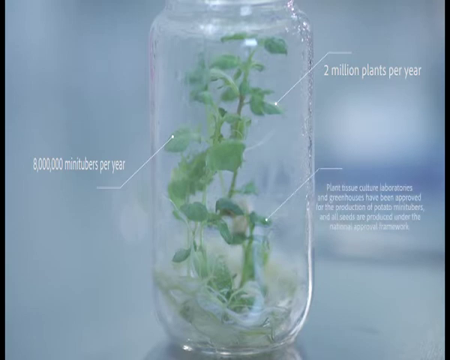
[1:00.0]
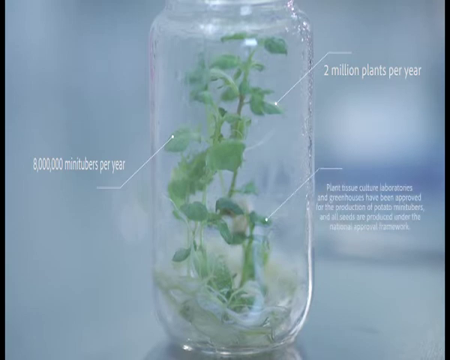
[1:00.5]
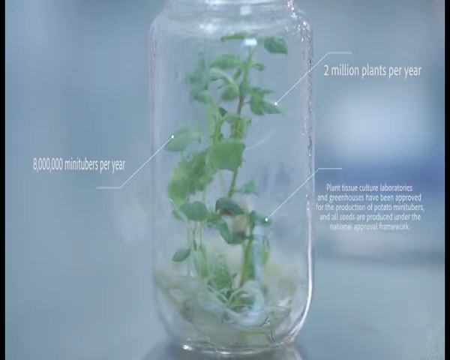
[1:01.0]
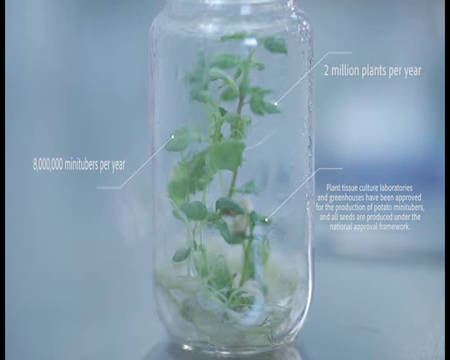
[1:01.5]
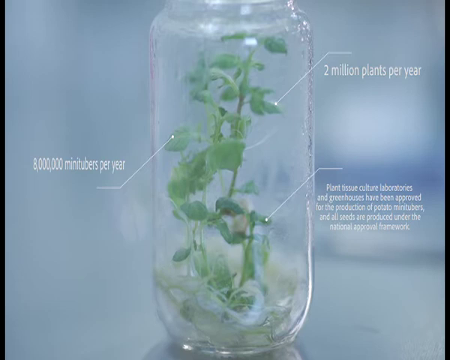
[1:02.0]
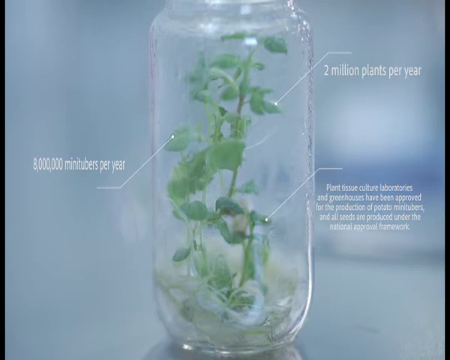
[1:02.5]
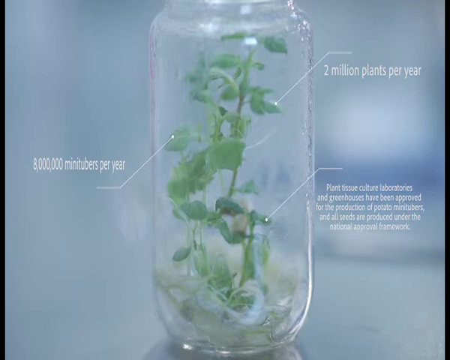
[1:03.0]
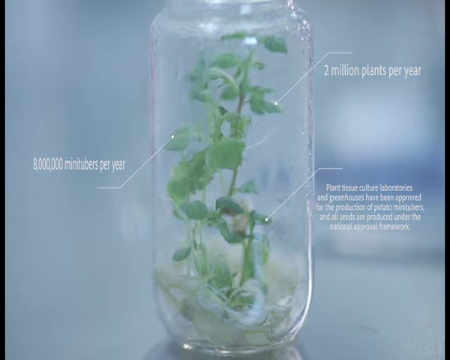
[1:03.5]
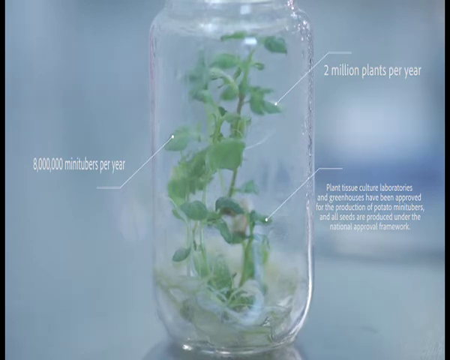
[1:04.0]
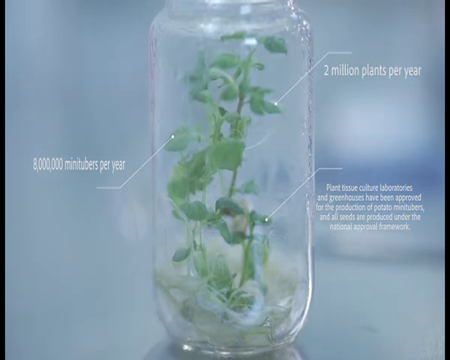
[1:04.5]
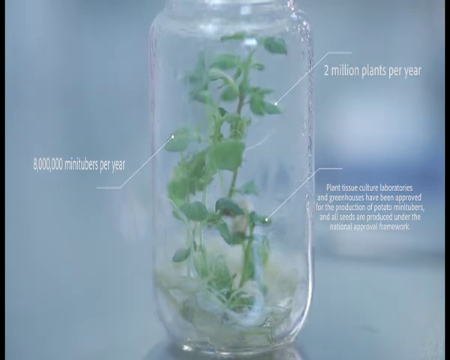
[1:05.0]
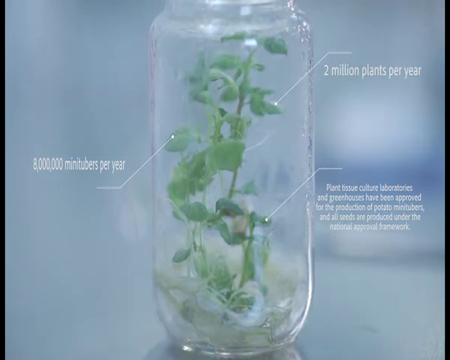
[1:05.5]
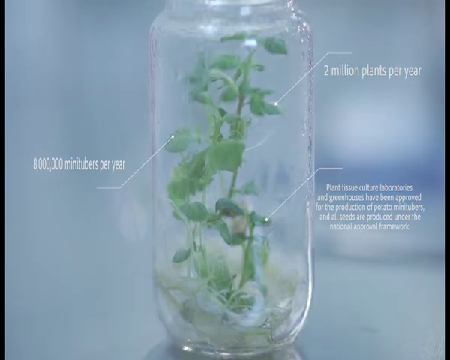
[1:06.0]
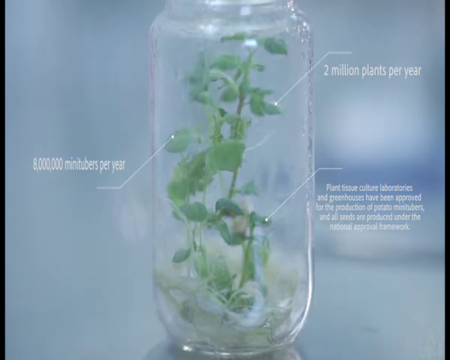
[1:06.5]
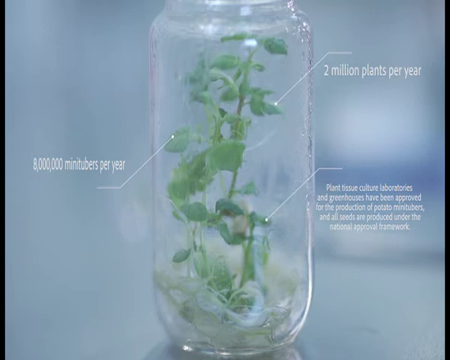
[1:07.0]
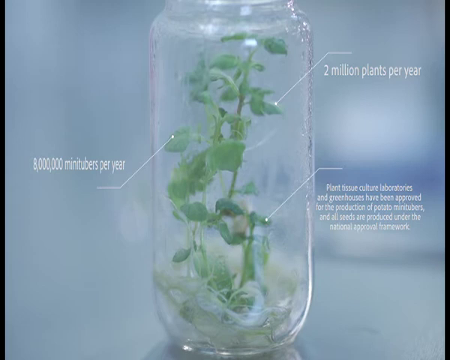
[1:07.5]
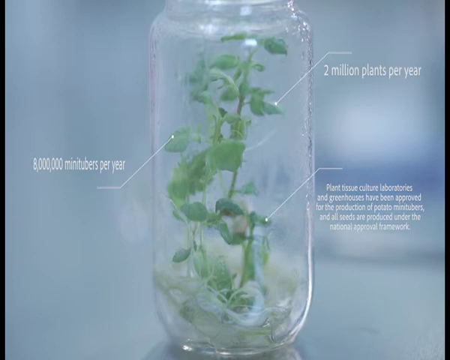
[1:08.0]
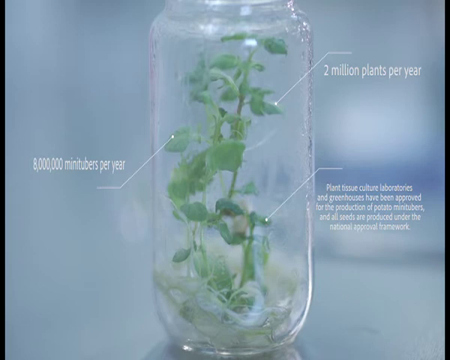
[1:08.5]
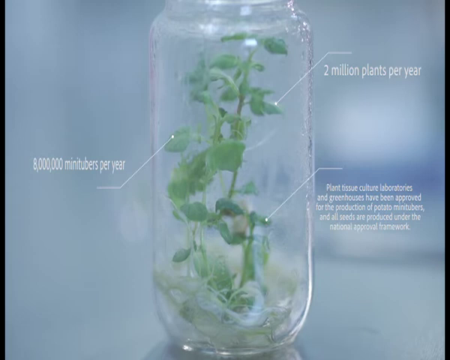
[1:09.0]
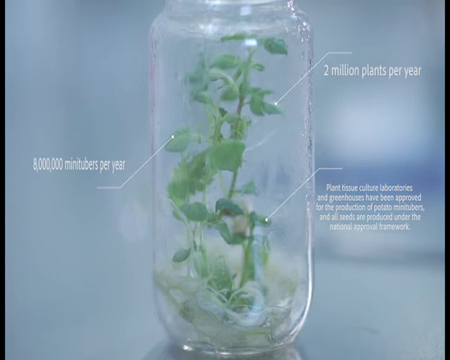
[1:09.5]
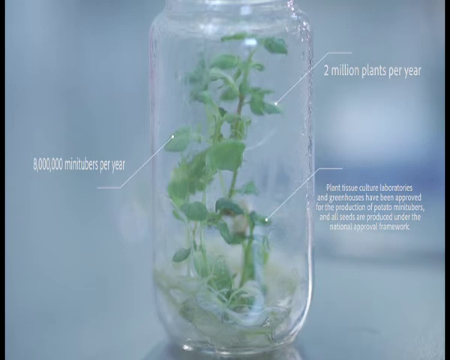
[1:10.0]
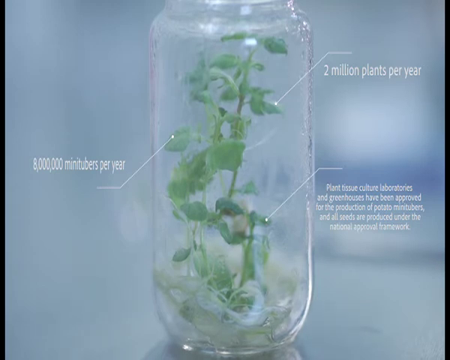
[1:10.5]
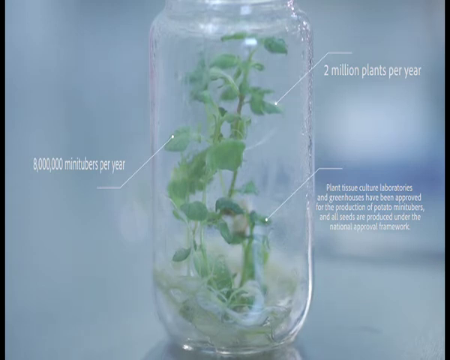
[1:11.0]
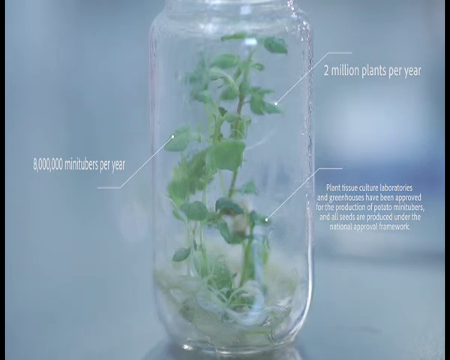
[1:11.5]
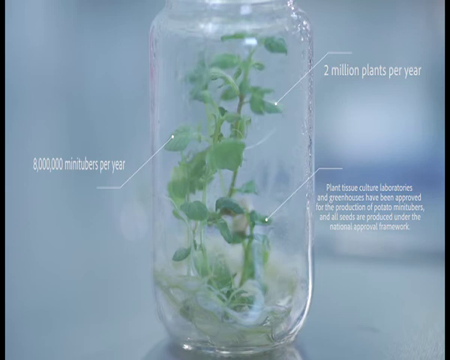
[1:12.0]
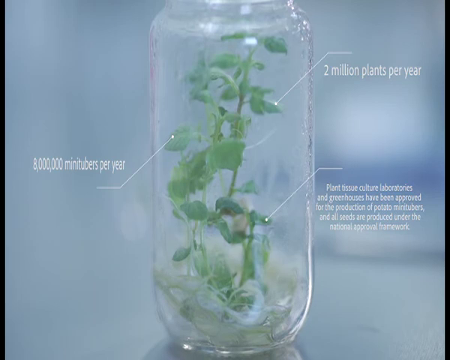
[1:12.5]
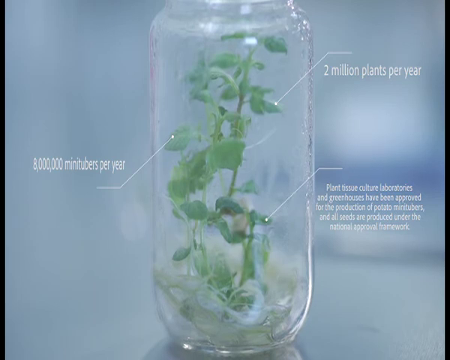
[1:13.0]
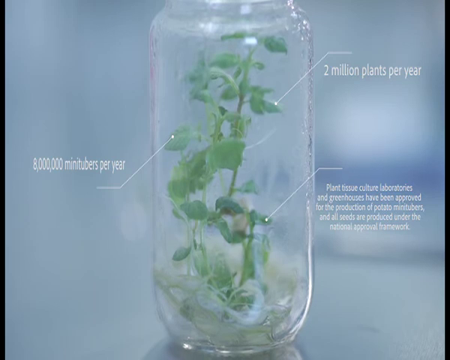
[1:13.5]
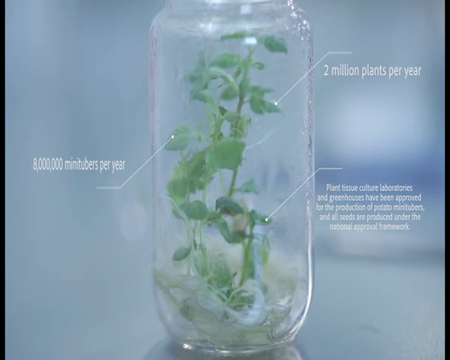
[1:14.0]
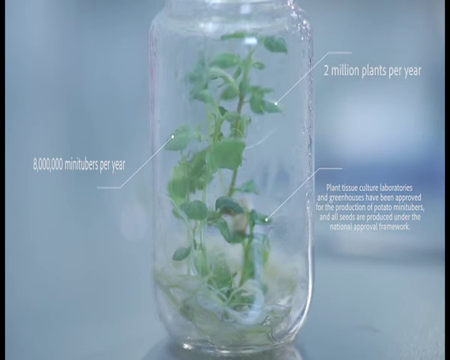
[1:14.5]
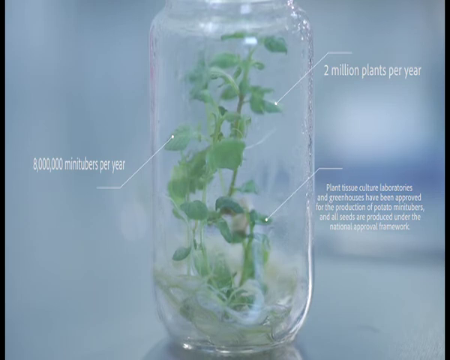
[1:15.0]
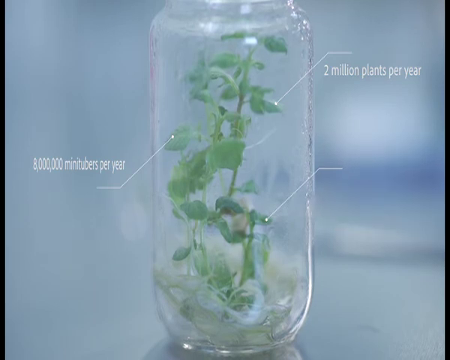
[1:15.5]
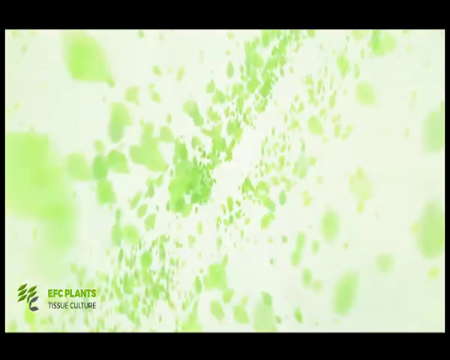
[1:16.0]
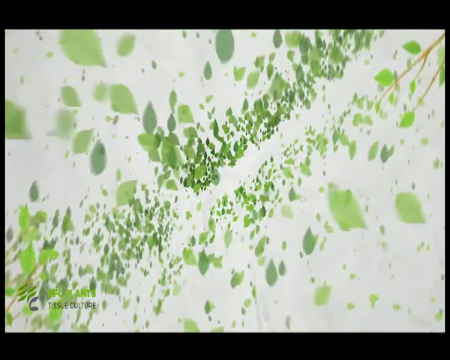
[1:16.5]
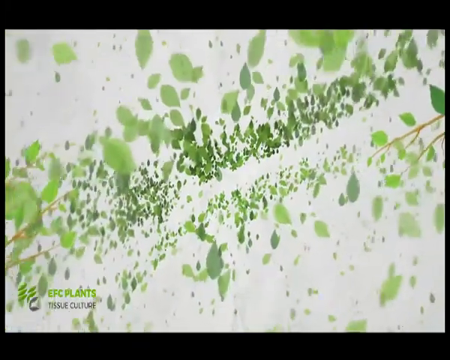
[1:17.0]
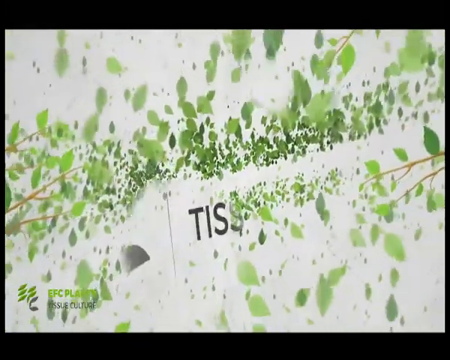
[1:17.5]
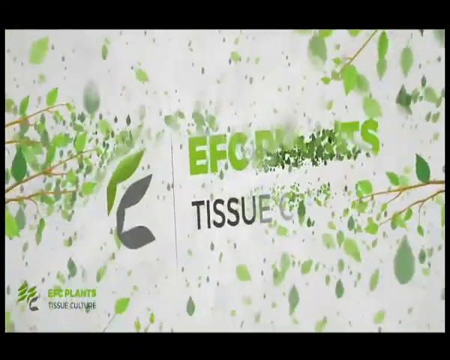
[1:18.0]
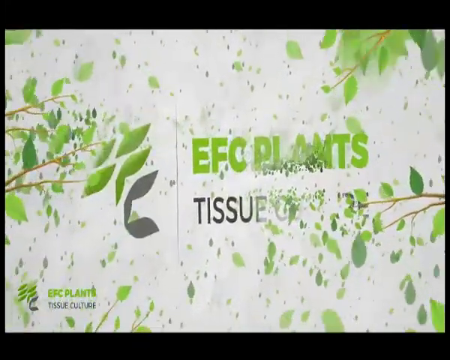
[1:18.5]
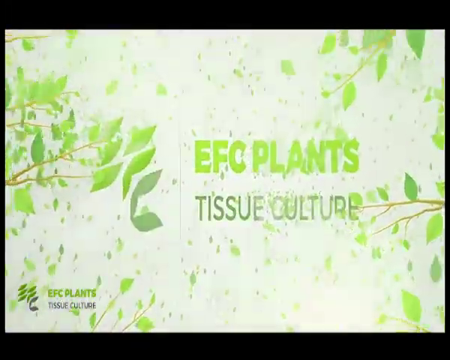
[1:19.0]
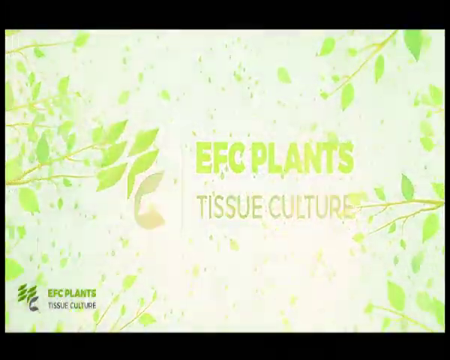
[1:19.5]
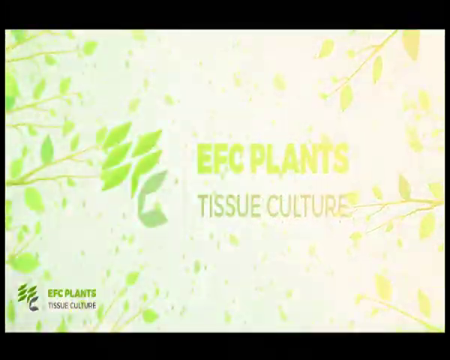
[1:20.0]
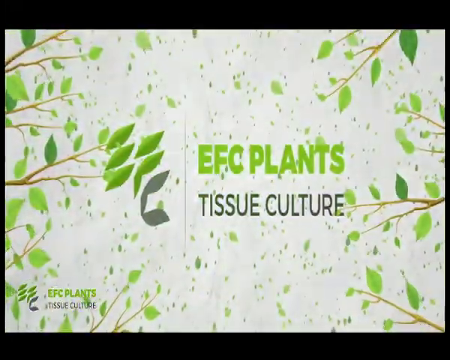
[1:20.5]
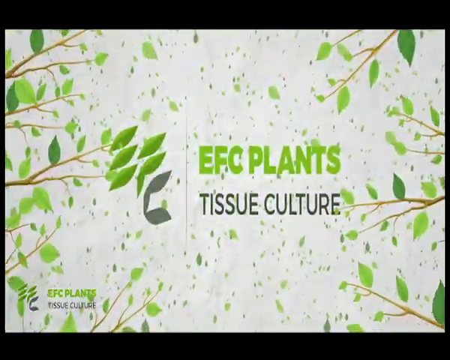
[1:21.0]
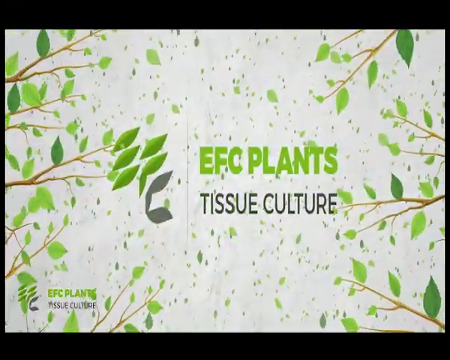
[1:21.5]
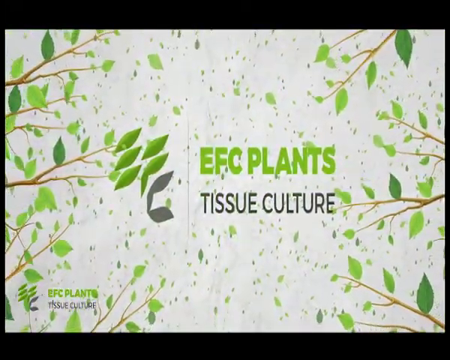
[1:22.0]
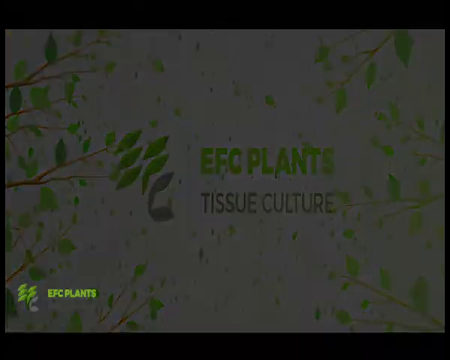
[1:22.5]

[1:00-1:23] A close-up shows a clear glass jar with a small plant stem growing inside, bearing tiny, delicate-looking leaves. The label on the left says "8 million minitubers per year." The first label at the top right says "2 million plants per year." The third label, also on the right side, says "plant tissue culture laboratories and greenhouses have been approved for the production of potato minitubers and all seeds are produced under the Natural Approval Framework." This image stays on screen for about eight more seconds. Next comes a close-up of what looks like splotches of green, which turn out to be leaves: lots of pale green leaves clustering together on the screen against an off-white background. The leaves gather and begin to create a text effect. Then leaves on branches and tree limbs appear to the left, with lots of leaves in the background, forming a design. Written across the middle of the screen is "EFC Plants Tissue Culture."